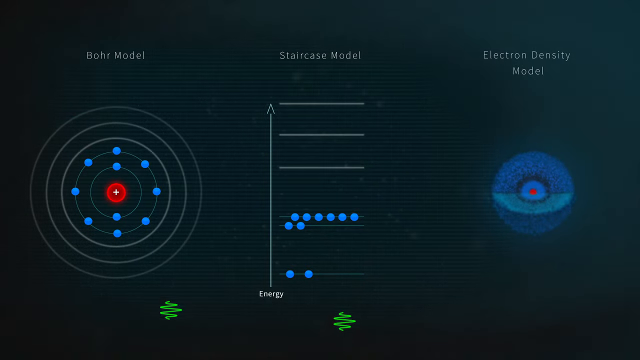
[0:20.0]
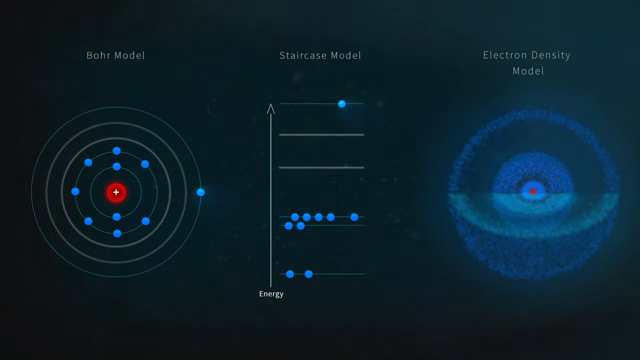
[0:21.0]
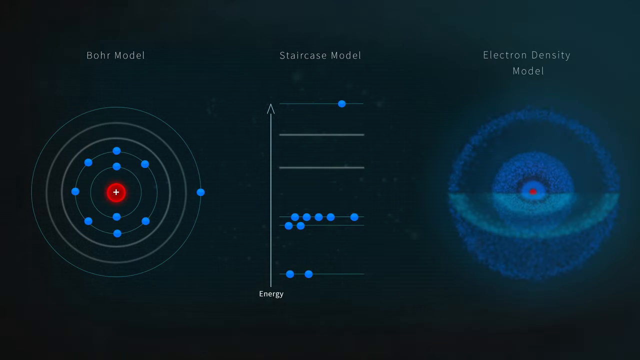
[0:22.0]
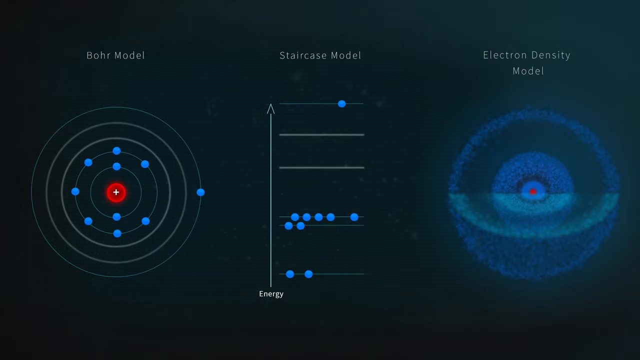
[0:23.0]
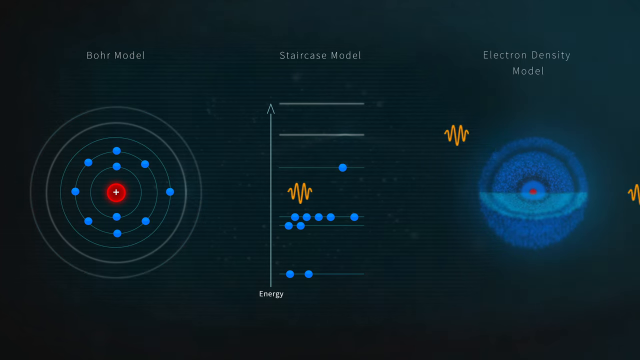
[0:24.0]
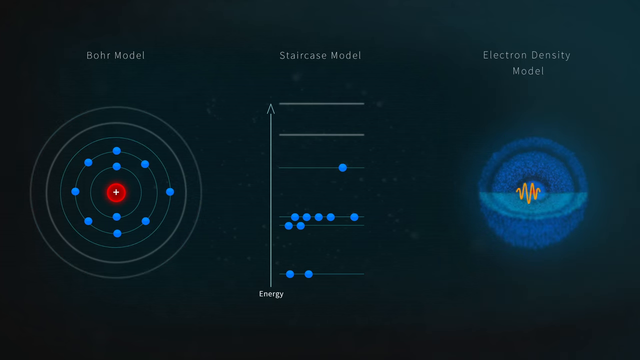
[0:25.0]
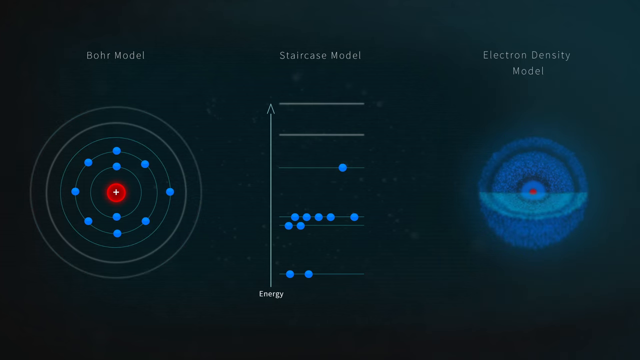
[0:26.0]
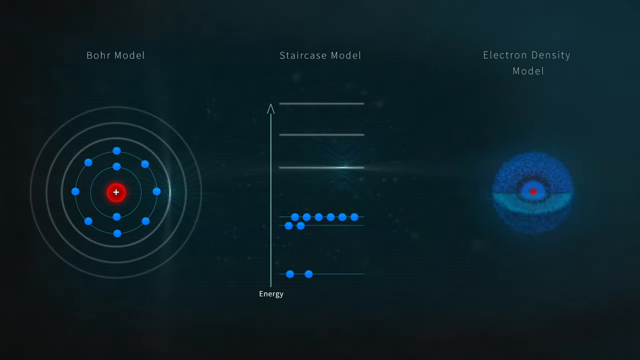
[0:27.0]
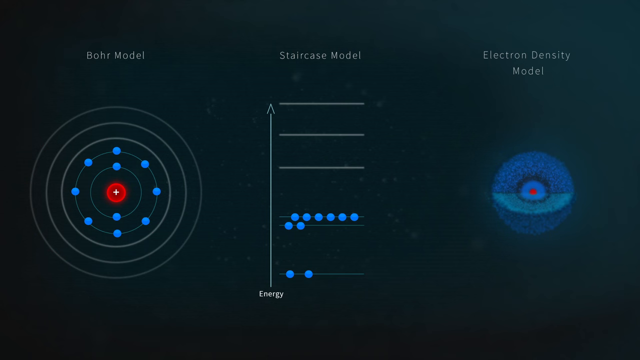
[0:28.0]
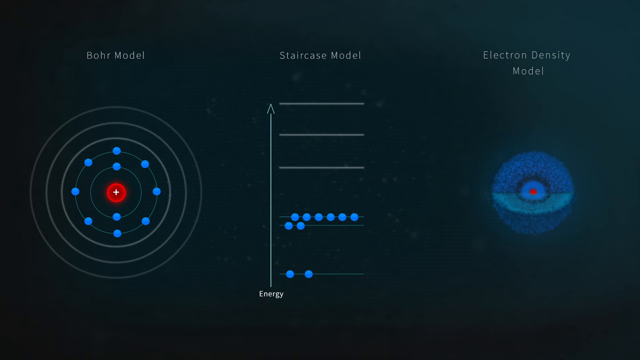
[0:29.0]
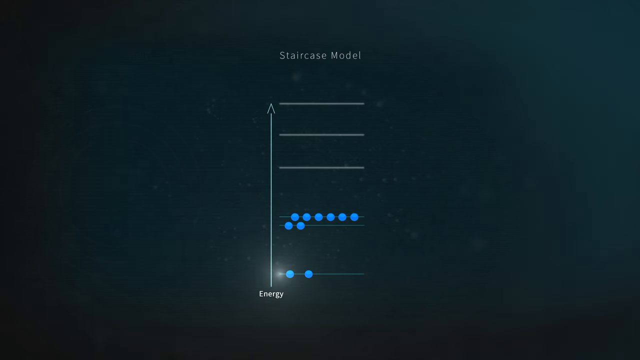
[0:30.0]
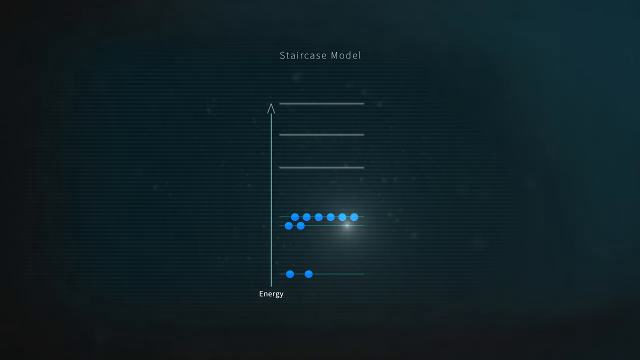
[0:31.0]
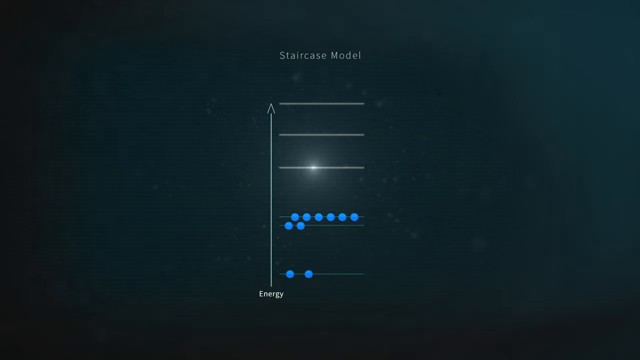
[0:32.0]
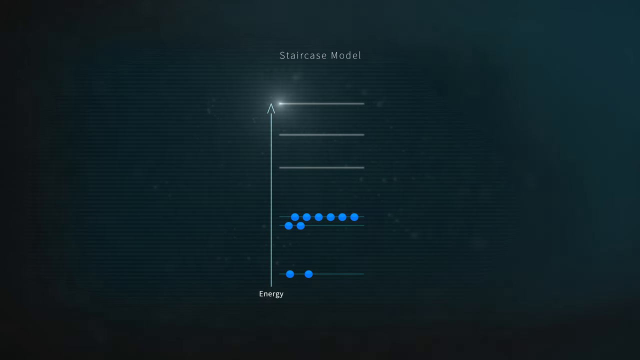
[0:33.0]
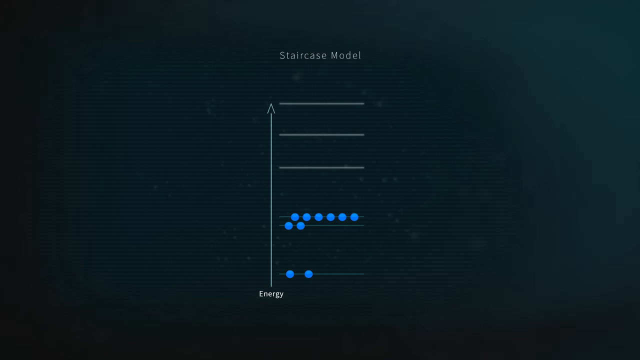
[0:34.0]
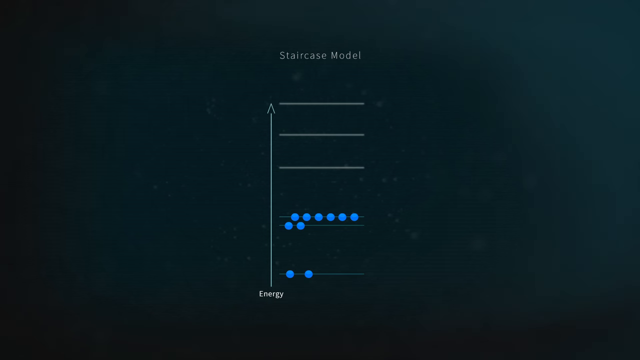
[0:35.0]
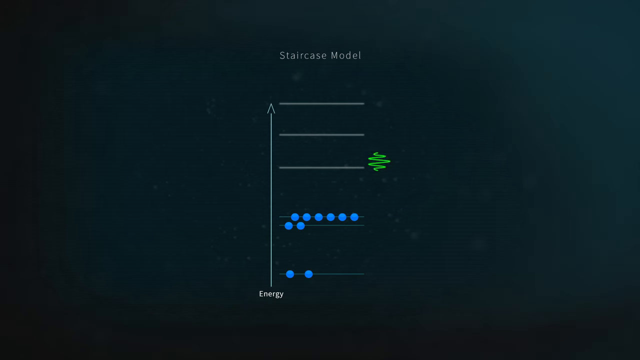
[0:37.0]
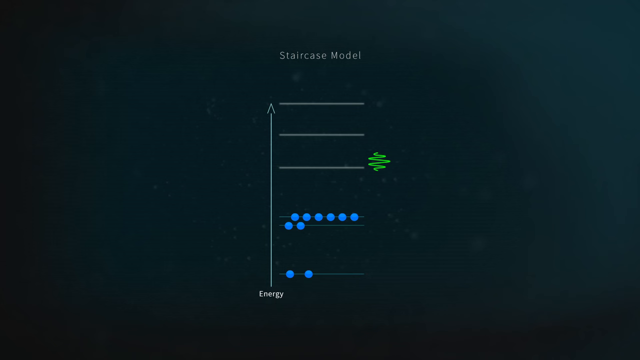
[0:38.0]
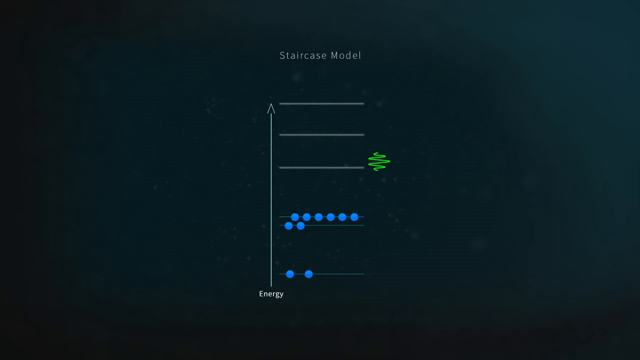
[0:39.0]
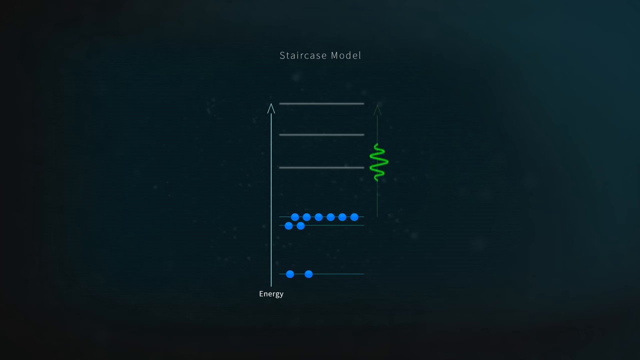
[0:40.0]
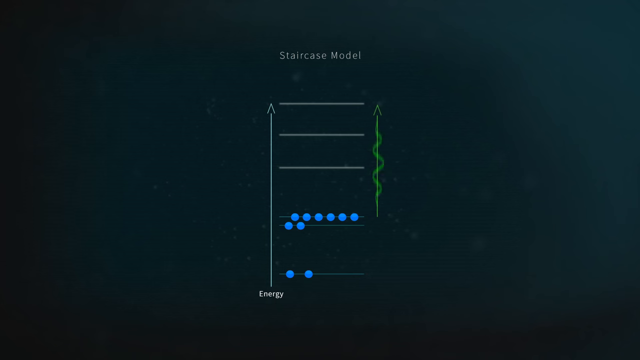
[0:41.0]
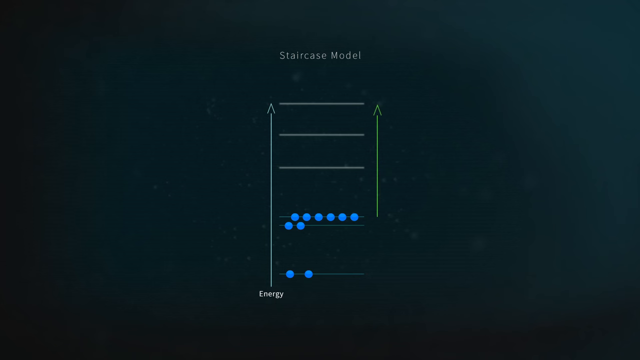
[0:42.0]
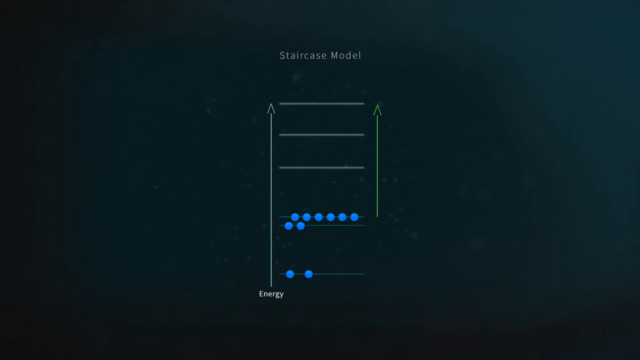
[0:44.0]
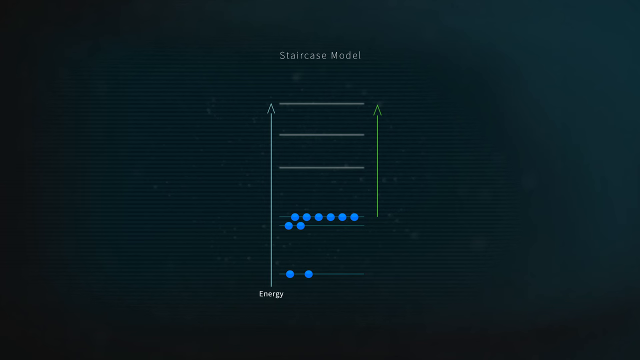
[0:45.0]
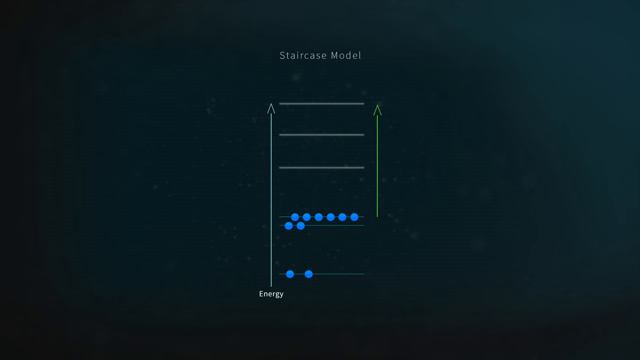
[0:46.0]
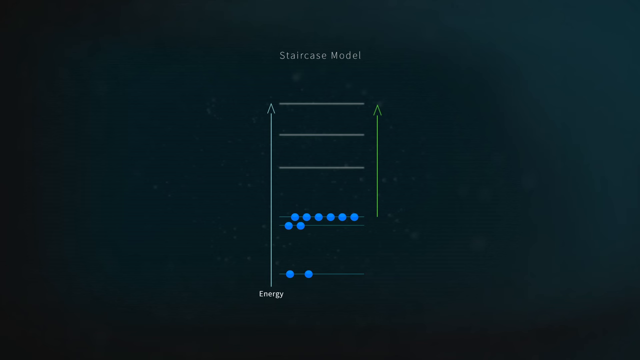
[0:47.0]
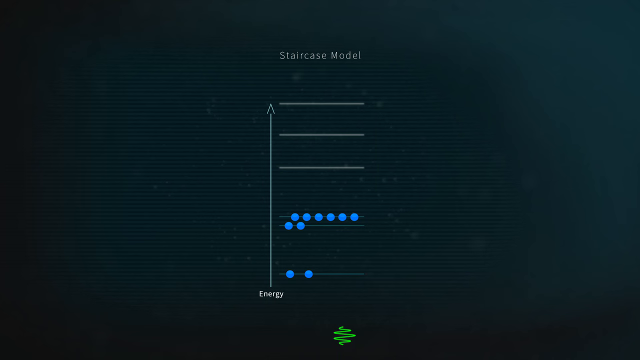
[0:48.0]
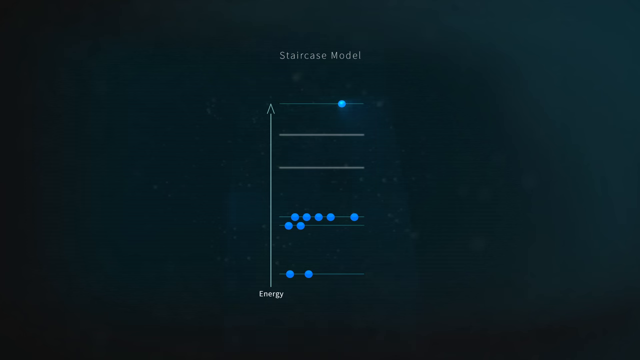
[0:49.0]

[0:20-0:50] Three different diagrams appear on a black screen, each taking up about a third of the screen. On the left is a classic model of an atom with a red nucleus and five circles around it; blue electrons sit on the first two circles, two on the first and eight on the second, and the outer circles are empty. The middle diagram shows a different model of the atom's energy levels: the lowest energy level is at the bottom with two dots for electrons, the second has eight dots, and three empty energy levels are near the top. On the far right is a 3D version of the atom that looks like a sphere with the upper slice cut out, with blue layers going down to the red center. Orange squiggly lines move across the screen from left to right in front of the diagrams. Then the left and right diagrams fade out. A very bright light appears on the bottom line of the middle diagram, moves across it, jumps up to the second line and moves across it, and then moves to each of the three higher lines. A green squiggly circle appears beside the first empty line, then slowly stretches out into a straight green line reaching the right side of the diagram. Then a single green squiggly line moves up from the bottom of the screen through the middle of the diagram.